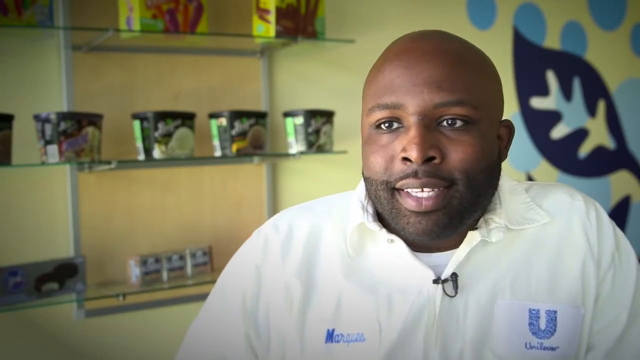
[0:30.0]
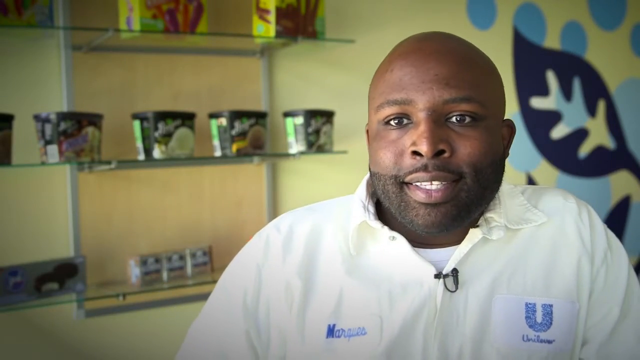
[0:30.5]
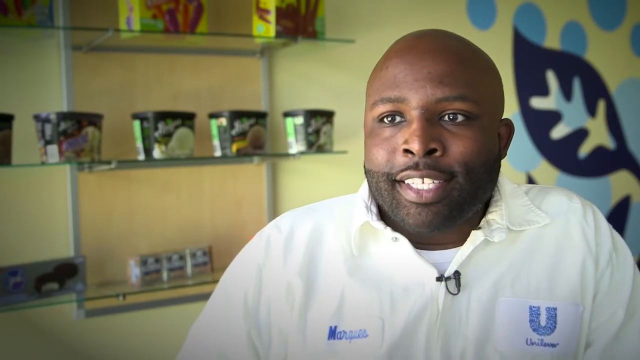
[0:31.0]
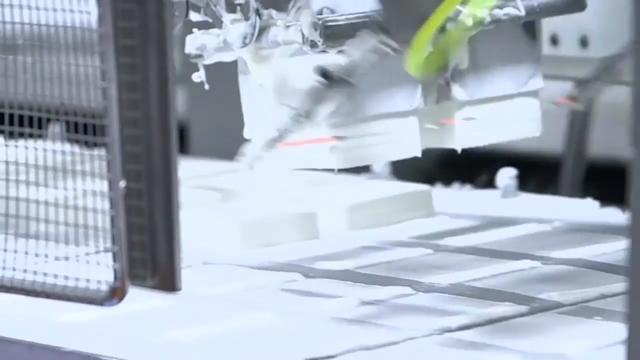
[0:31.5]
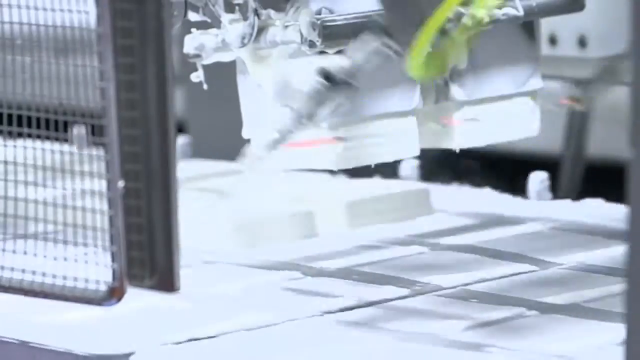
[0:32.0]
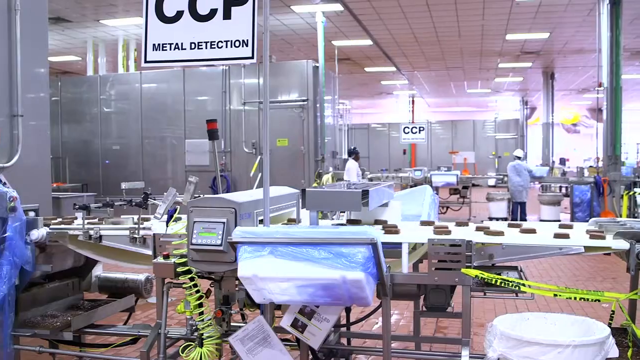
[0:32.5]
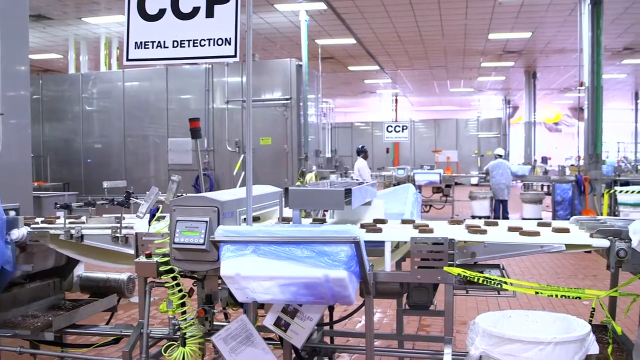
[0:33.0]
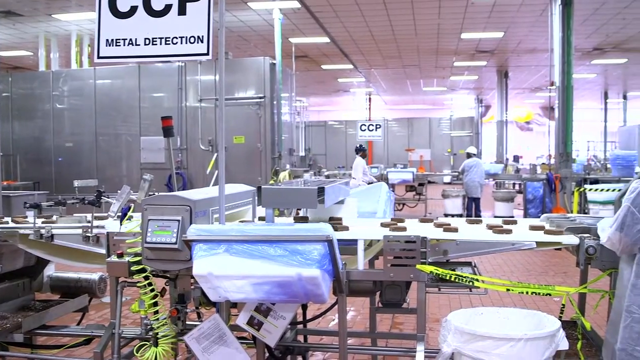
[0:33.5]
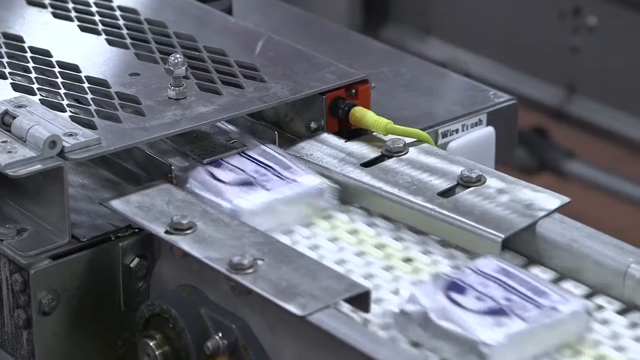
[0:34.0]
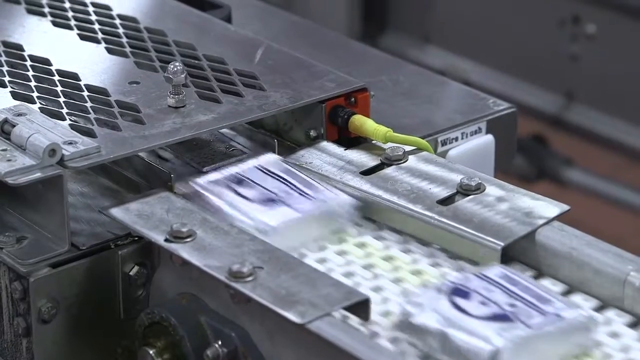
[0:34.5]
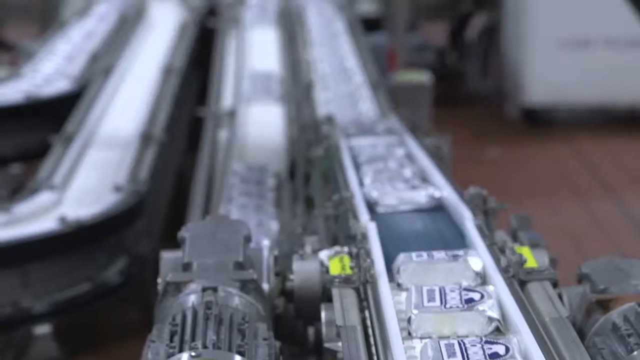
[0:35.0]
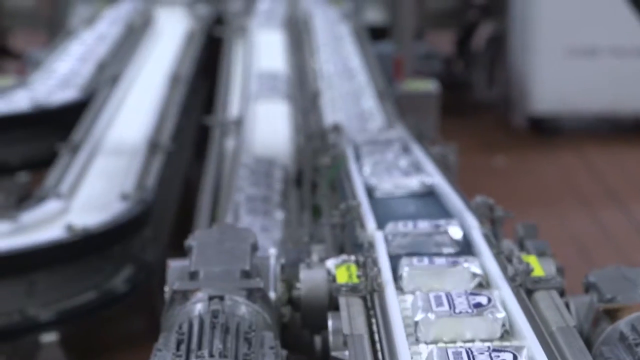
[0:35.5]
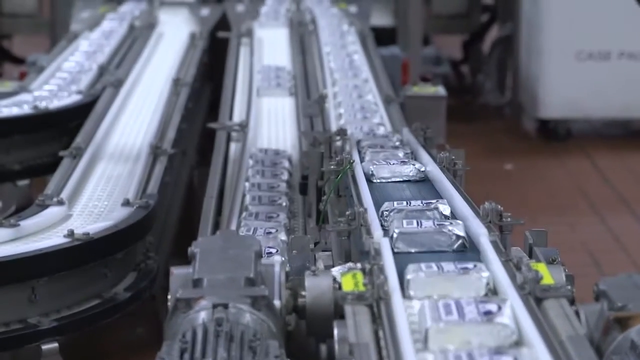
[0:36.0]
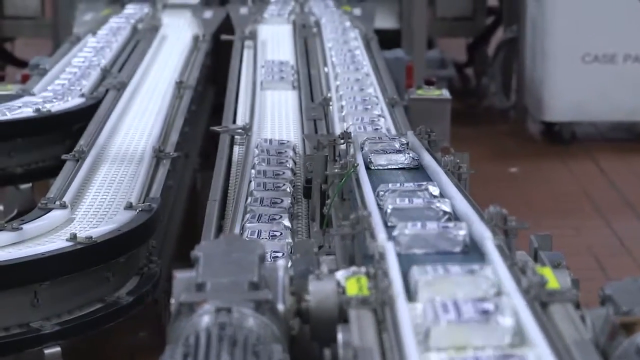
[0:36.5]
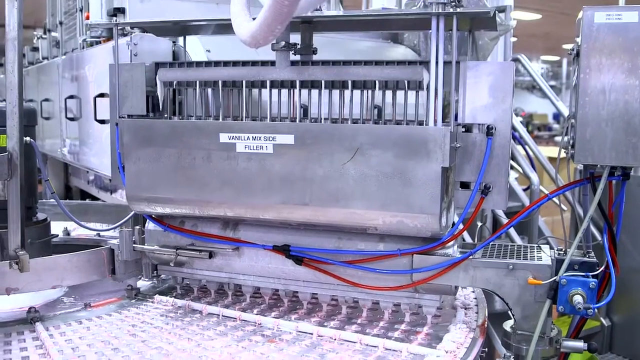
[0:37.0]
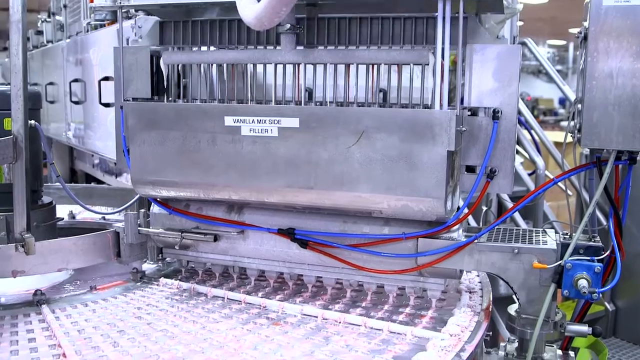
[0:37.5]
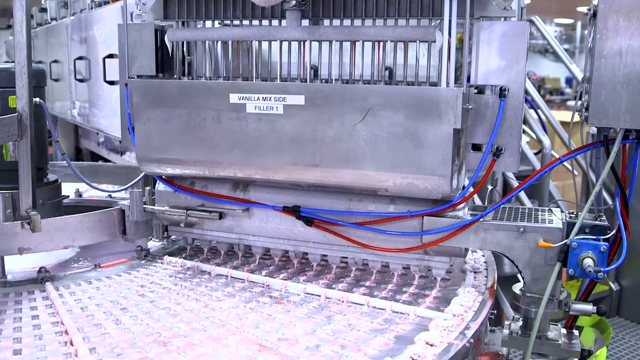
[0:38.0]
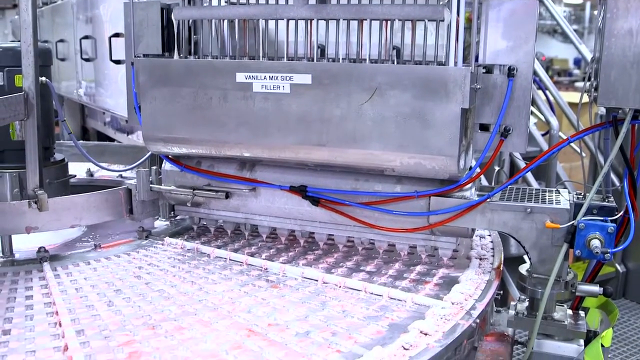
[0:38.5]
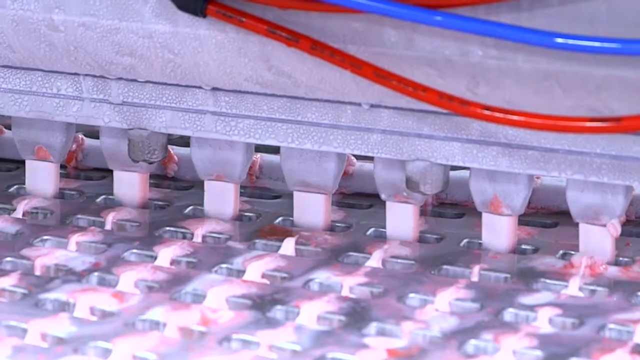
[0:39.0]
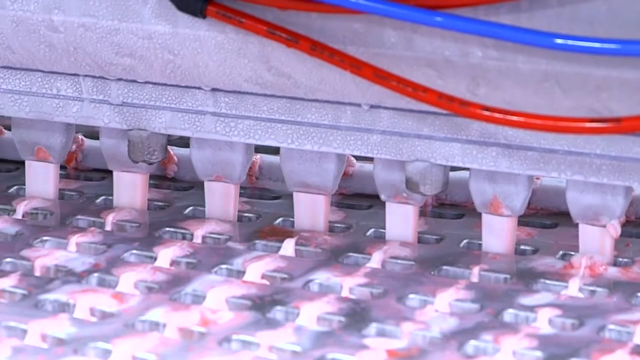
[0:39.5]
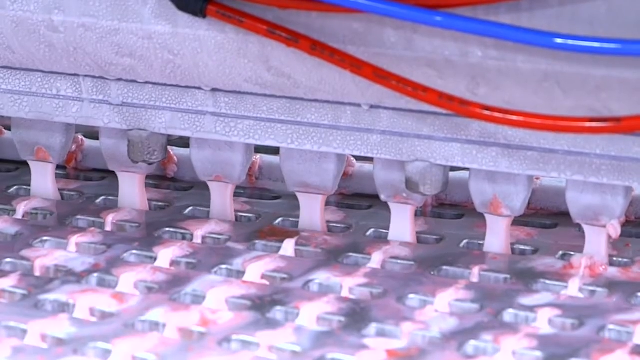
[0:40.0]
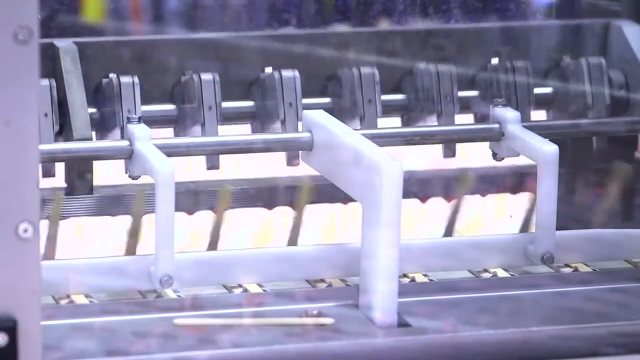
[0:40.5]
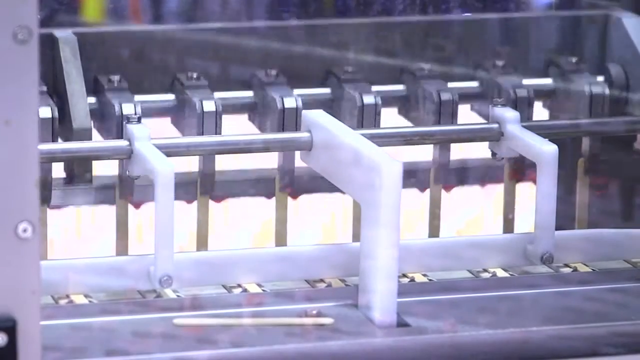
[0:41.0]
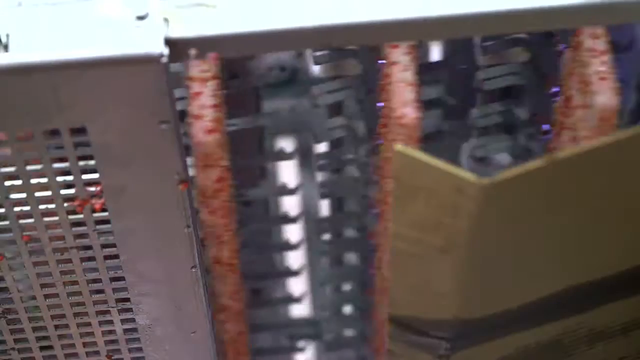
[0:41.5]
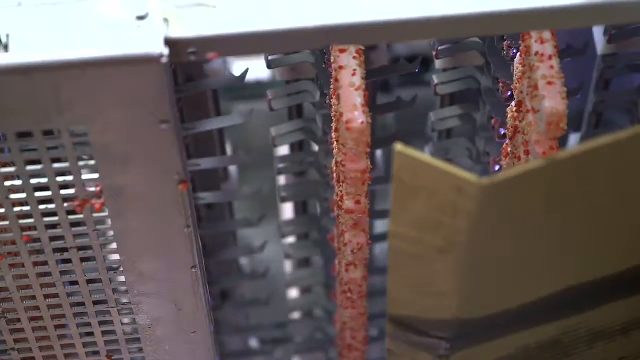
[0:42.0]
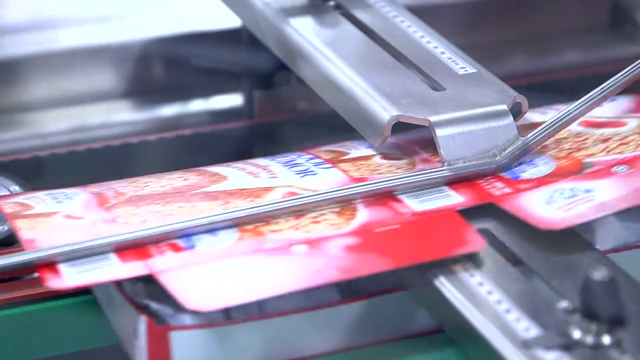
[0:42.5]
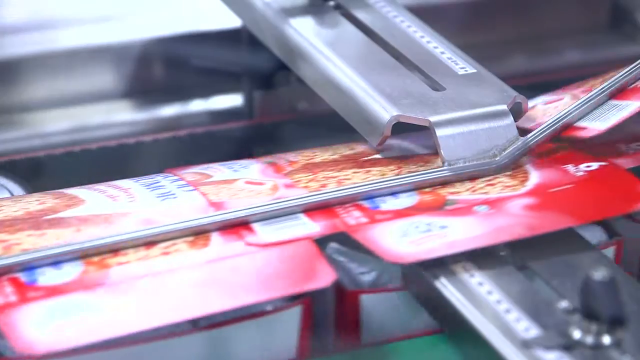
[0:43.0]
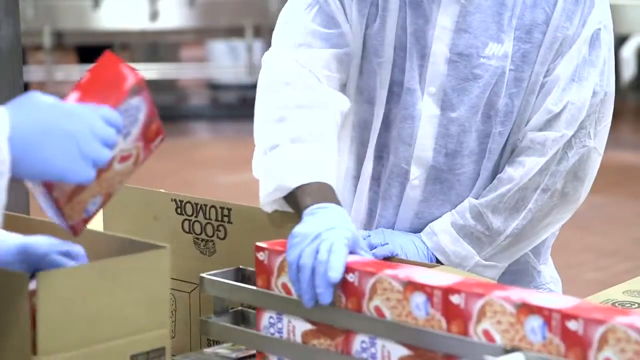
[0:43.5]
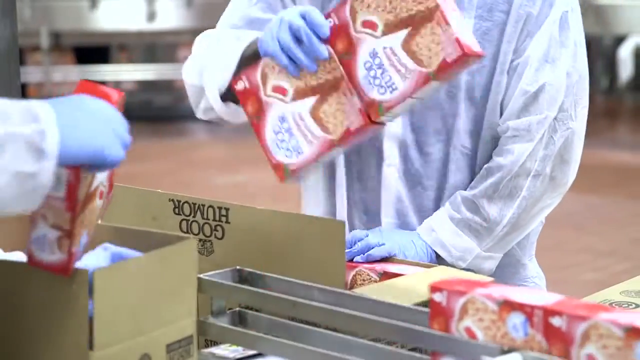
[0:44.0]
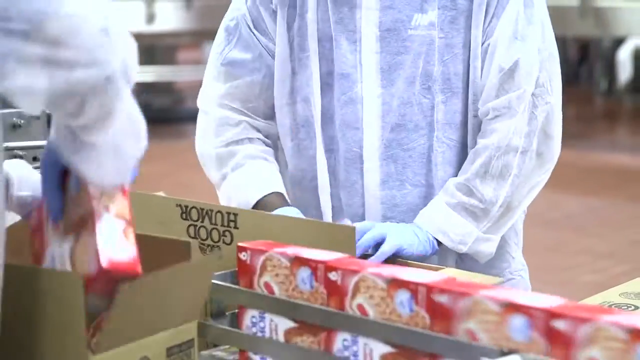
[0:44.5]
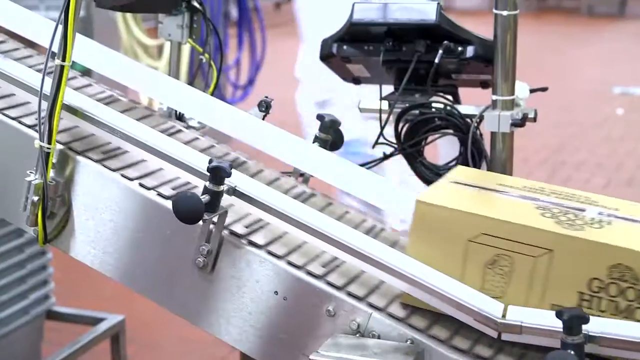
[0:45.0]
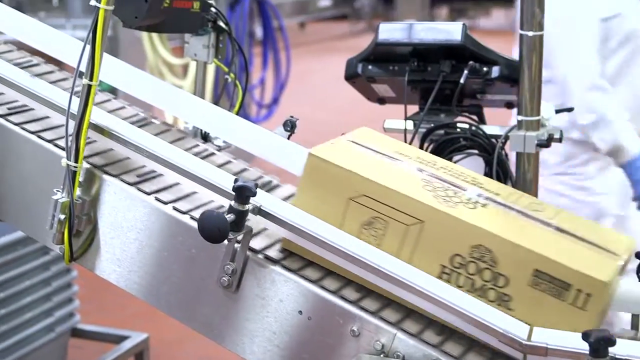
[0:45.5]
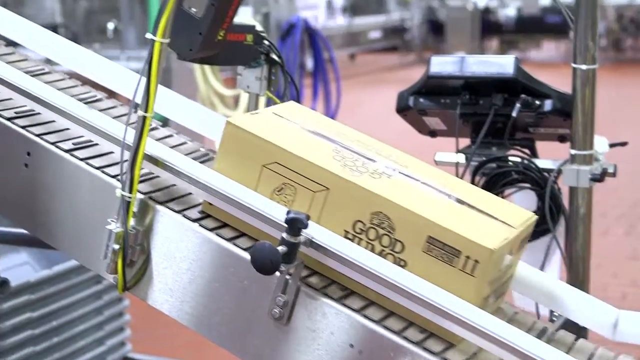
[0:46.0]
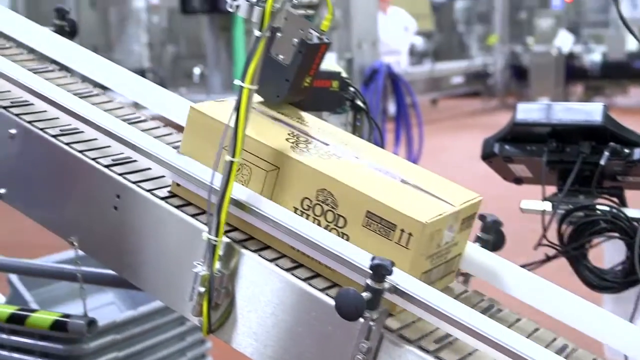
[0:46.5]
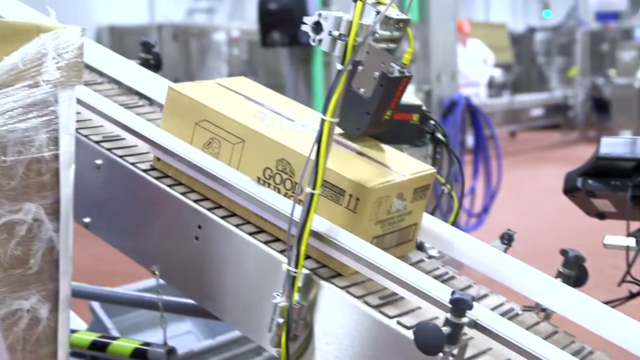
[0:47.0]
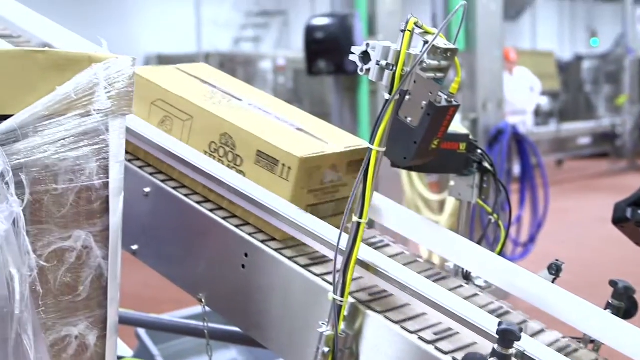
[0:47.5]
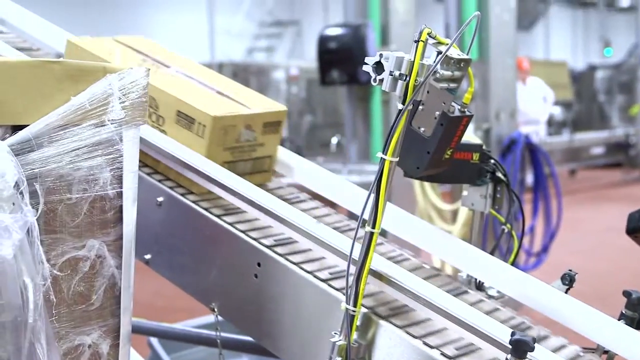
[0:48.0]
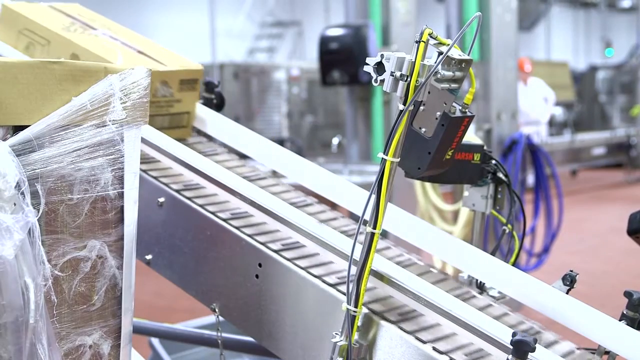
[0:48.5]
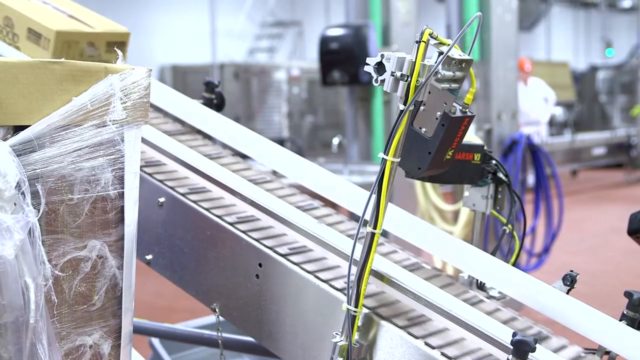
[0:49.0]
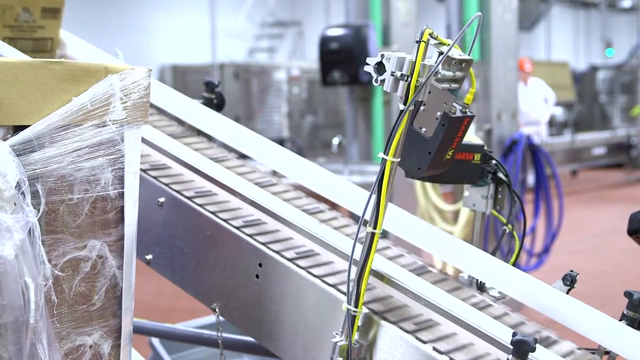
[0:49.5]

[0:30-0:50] The ice cream is moved around, and the camera zooms in on several types. A popsicle with fudge is visible. Breyers chocolate chip mint is being packaged as the plastic containers move together around the conveyor belt. Another Breyers ice cream with a different flavor, chocolate, moves along the conveyor belt while several individuals walk by. The video transitions back to Marcus, who is sitting down having a conversation. Klondike bars are at the bottom left, a little more clearly shown, though they are all out of focus, including the Breyers ice cream and the popsicles at the top. Next, an individual appears to open a mixer, revealing the ice cream, where silver metallic instruments are stirring what appears to be white ice cream. Marcus then acts out the stirring, rotating his right arm in circles as he smiles.